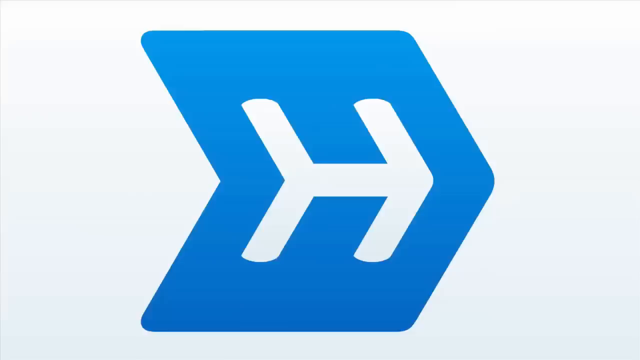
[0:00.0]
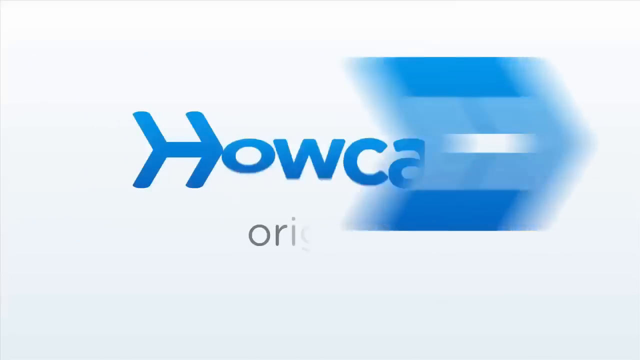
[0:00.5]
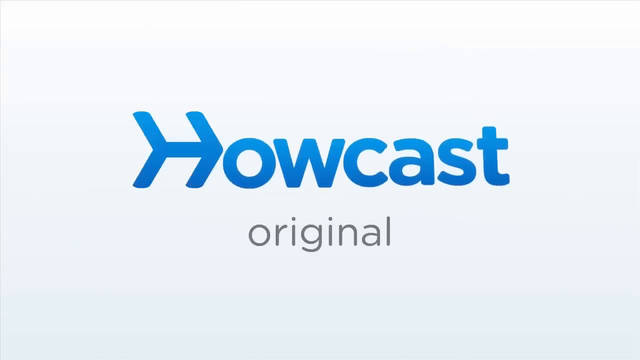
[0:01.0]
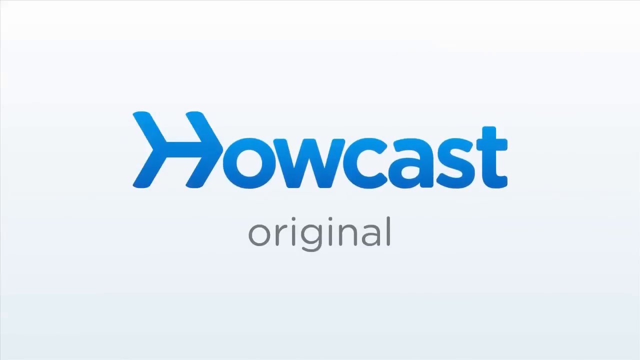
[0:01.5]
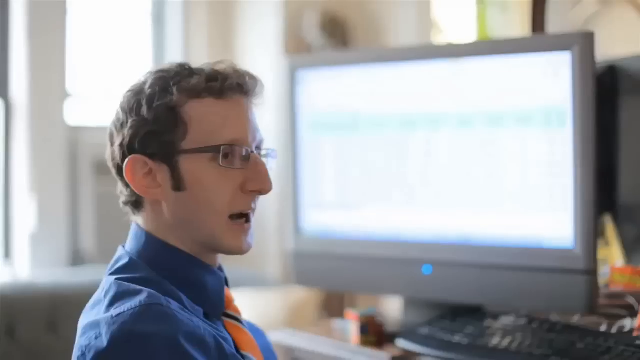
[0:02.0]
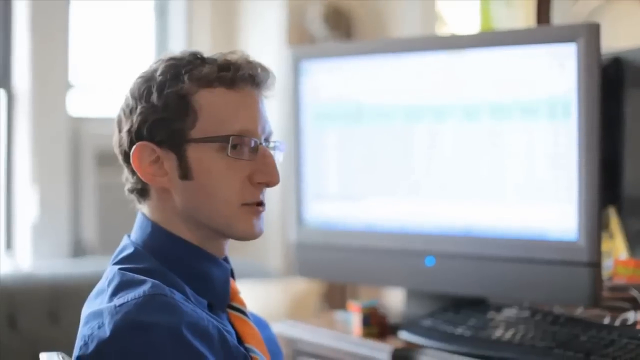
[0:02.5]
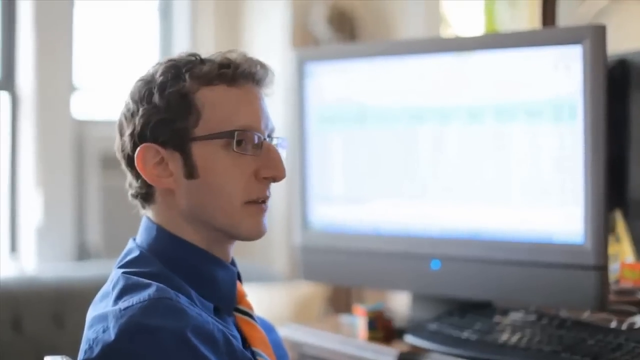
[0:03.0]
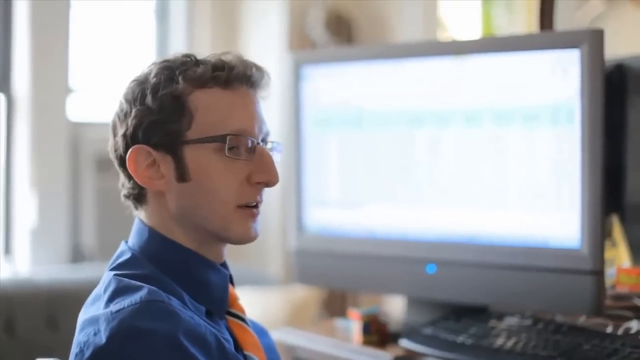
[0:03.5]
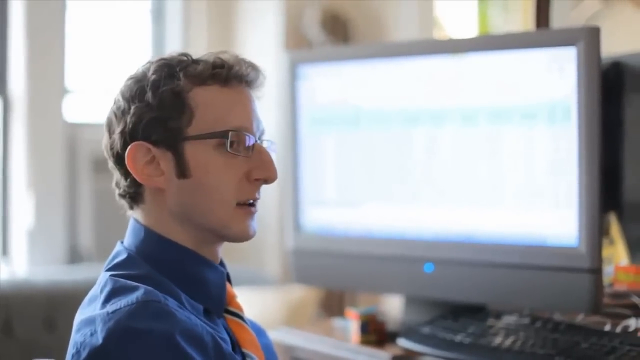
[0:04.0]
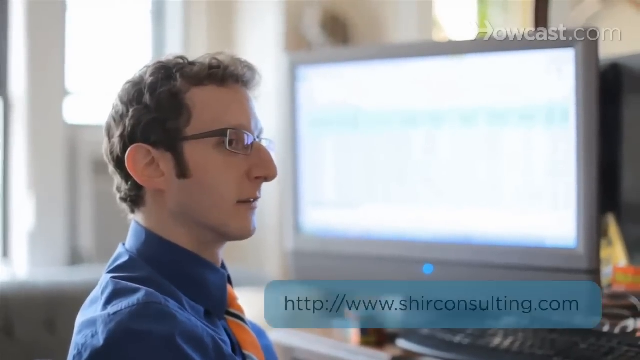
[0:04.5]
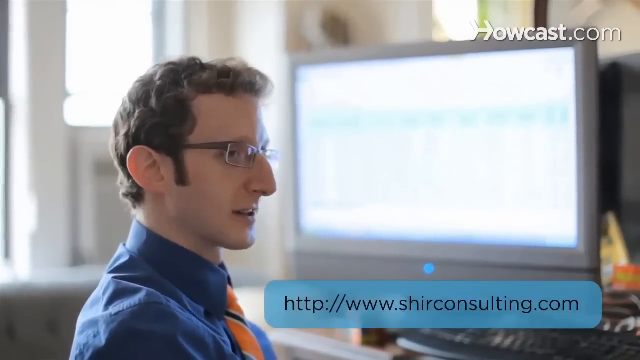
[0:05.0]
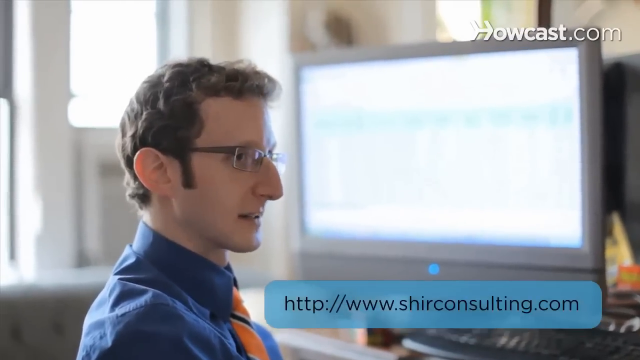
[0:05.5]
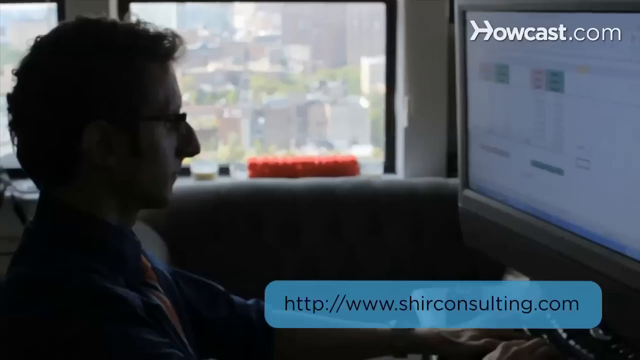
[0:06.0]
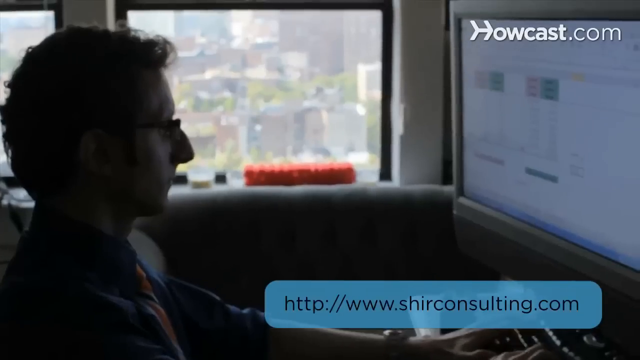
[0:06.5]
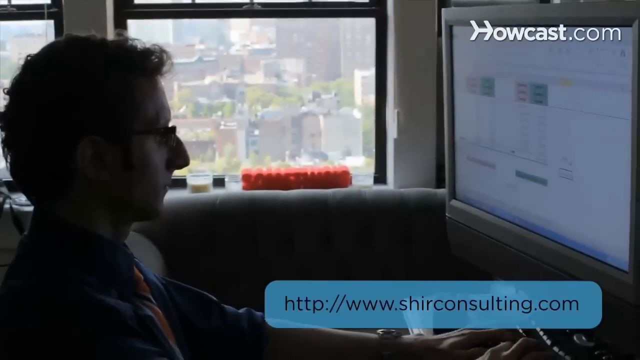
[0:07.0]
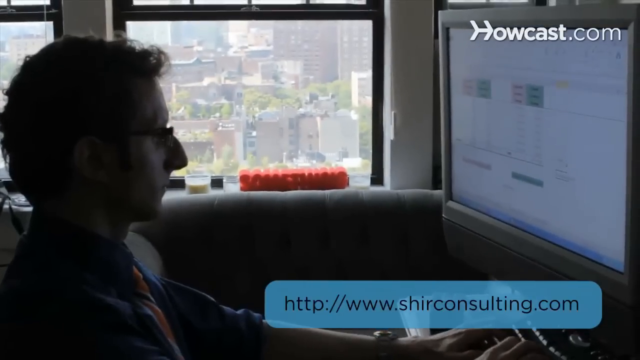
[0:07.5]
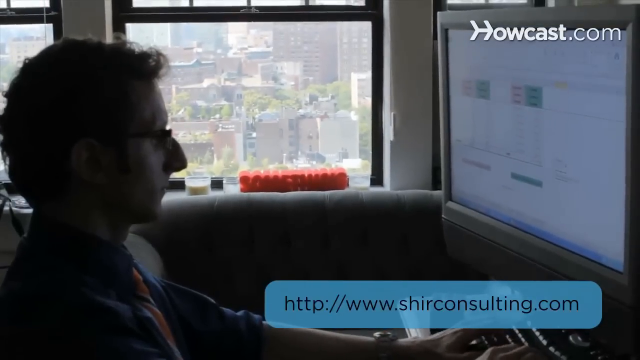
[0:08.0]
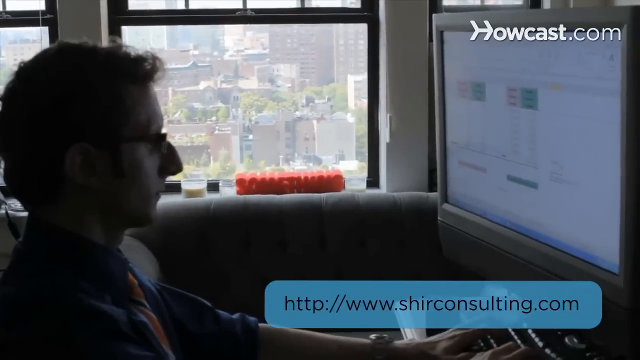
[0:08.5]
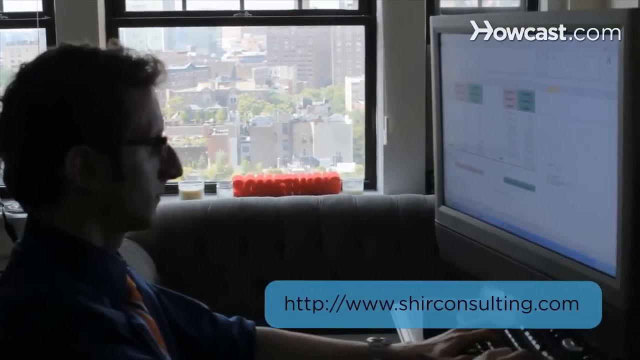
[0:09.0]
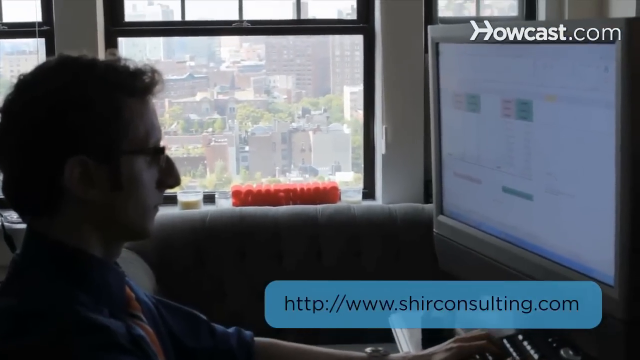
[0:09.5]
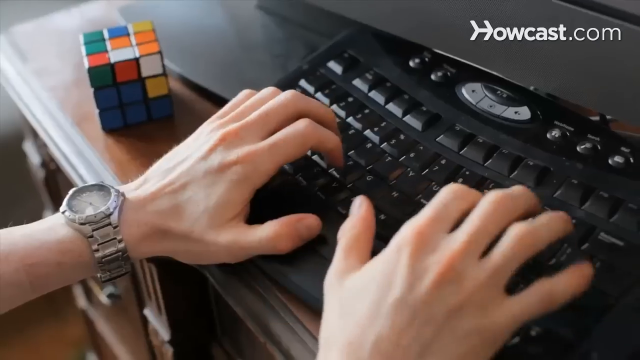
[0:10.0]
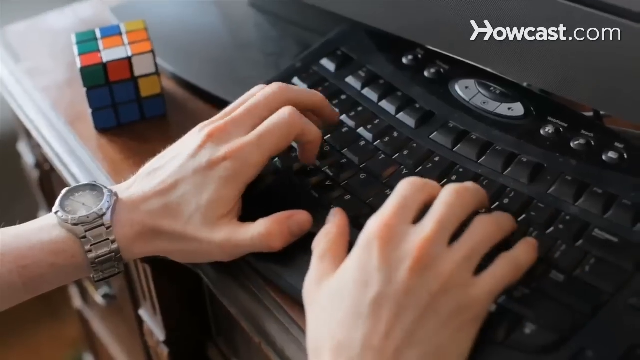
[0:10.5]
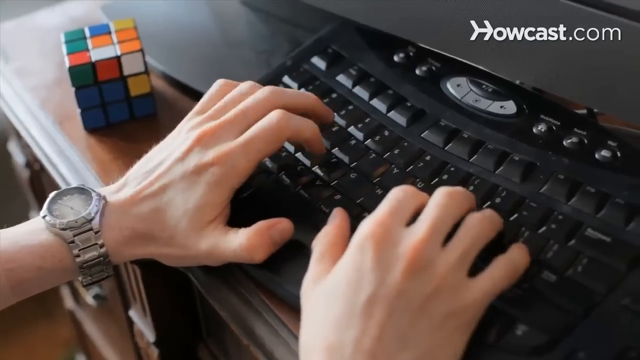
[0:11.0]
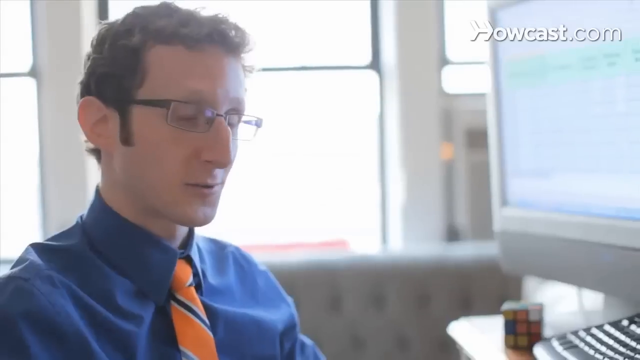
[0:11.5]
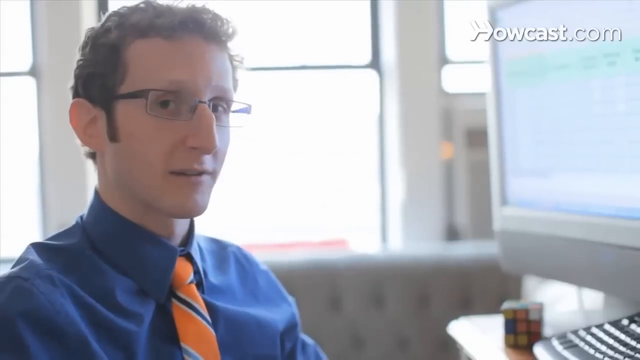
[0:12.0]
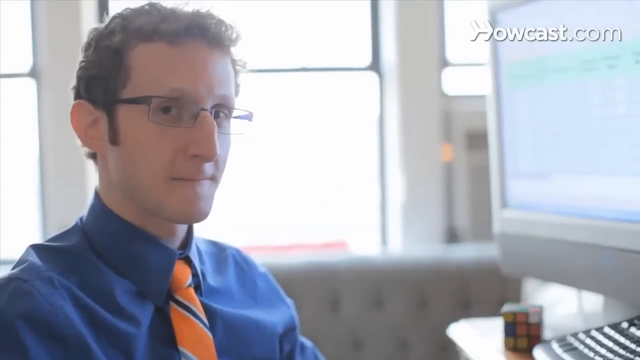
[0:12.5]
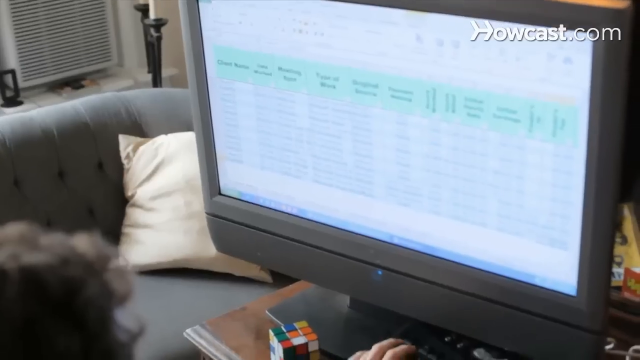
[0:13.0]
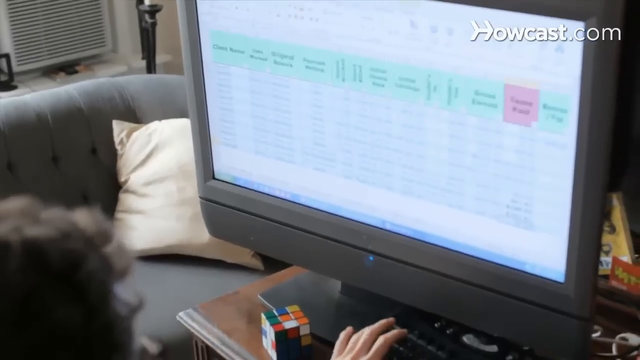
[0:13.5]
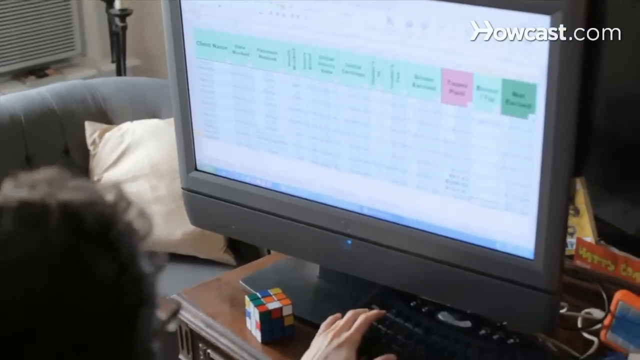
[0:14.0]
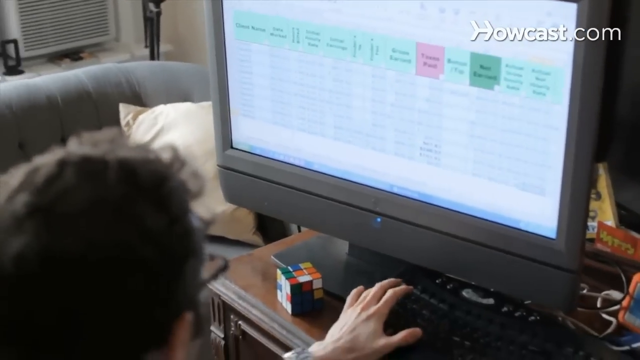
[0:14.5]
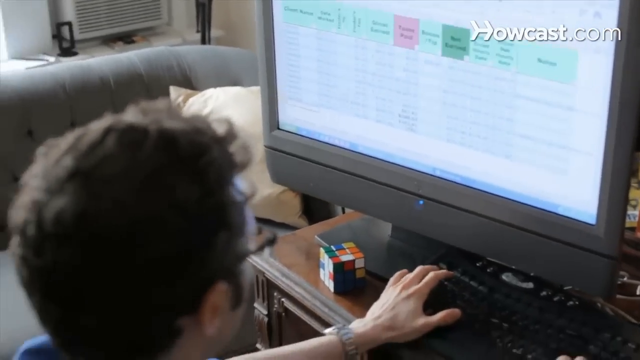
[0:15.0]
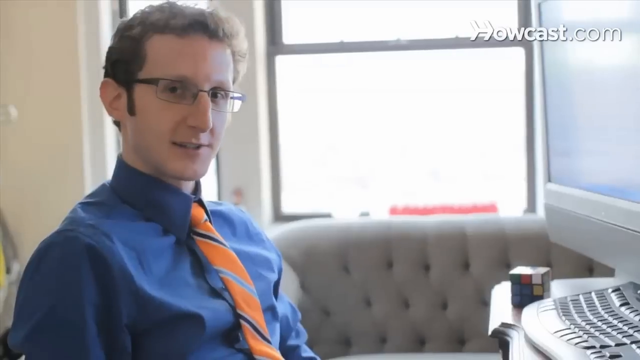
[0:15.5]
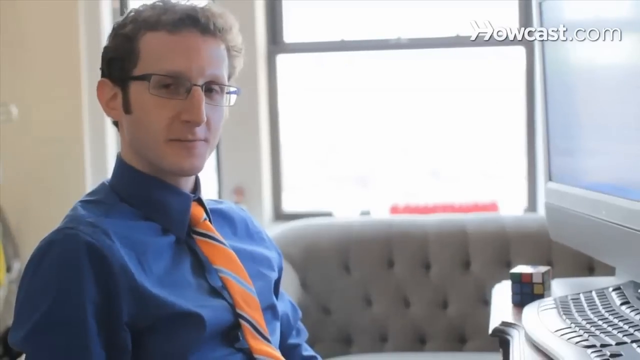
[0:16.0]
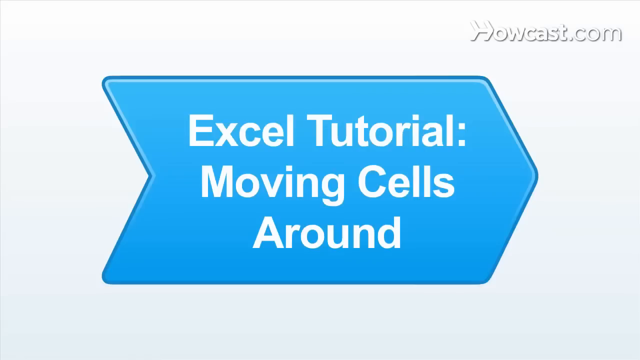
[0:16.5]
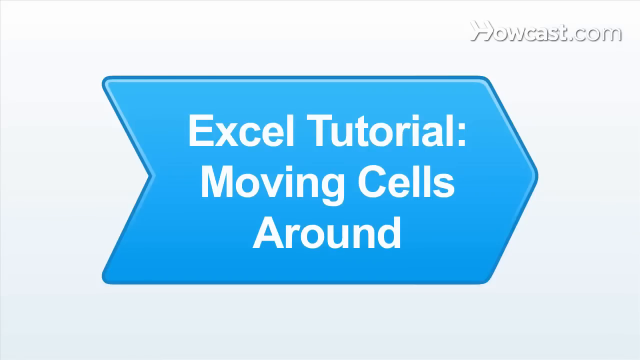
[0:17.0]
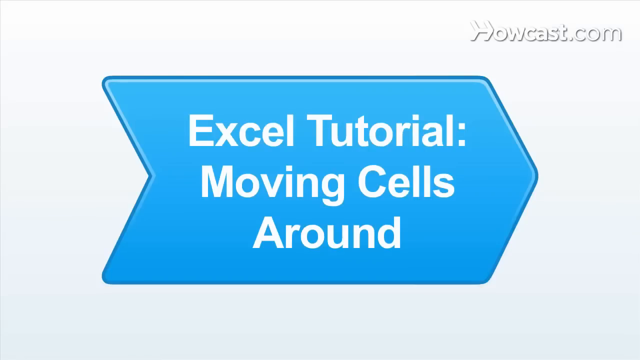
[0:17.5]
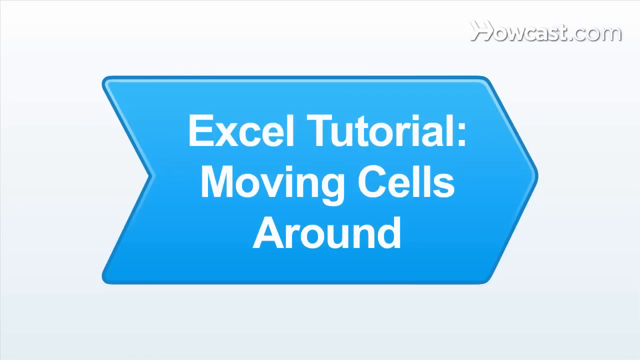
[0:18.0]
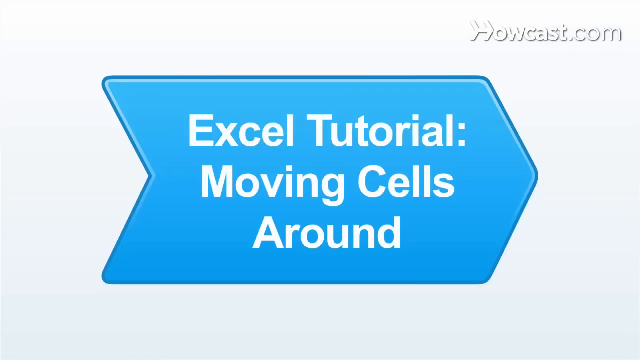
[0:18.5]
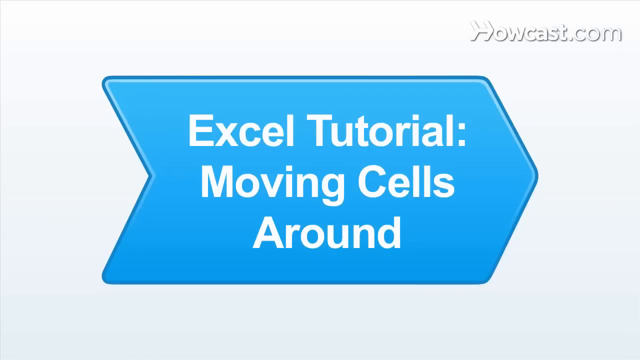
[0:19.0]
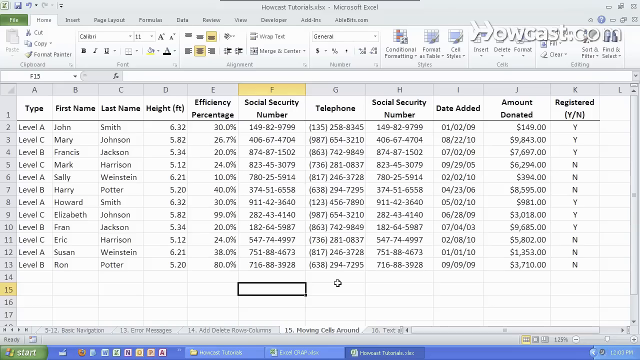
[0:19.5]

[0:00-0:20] The video opens as a Howcast original. A white man with glasses, curly hair, a big nose and small ears wears a blue shirt, a yellow-orange tie and a watch. His glasses look like transition glasses. He types something on his computer and seems to be working in Excel. The footage is very grainy and hard to see. The video then transitions into an Excel tutorial, and an Excel spreadsheet appears with different categories or attributes: first name, last name, high efficiency percentage, social security number, telephone, more social security number, the added date, amount donated, whether they are registered (yes or no), and their type, level A, B, or C.